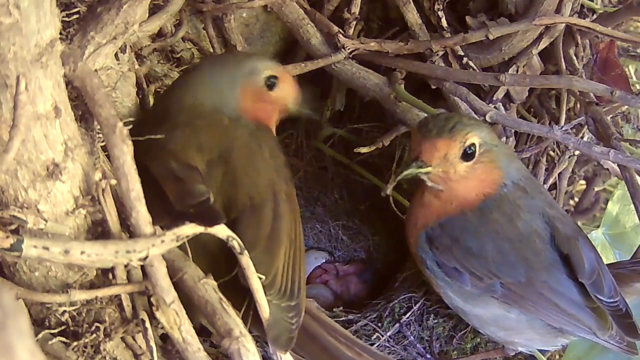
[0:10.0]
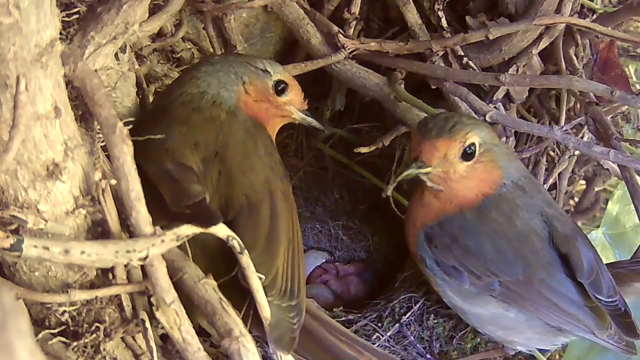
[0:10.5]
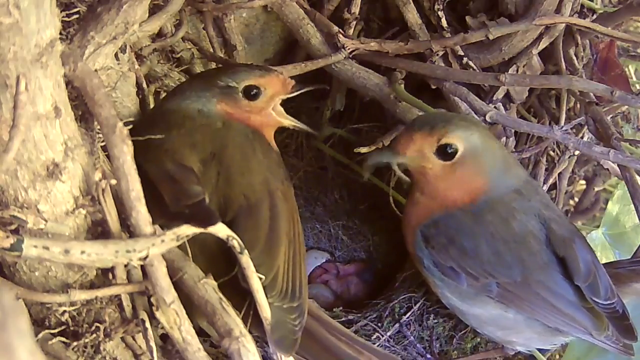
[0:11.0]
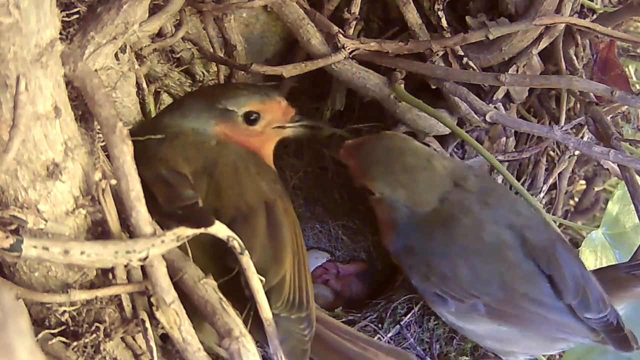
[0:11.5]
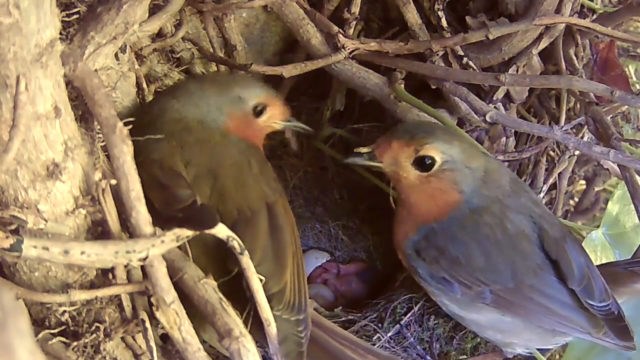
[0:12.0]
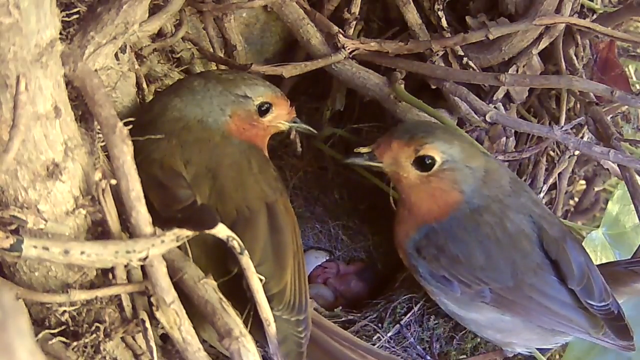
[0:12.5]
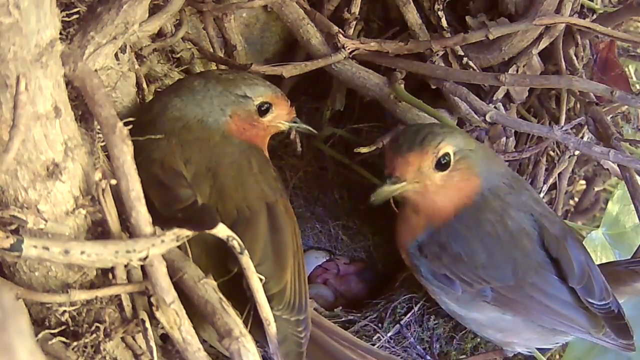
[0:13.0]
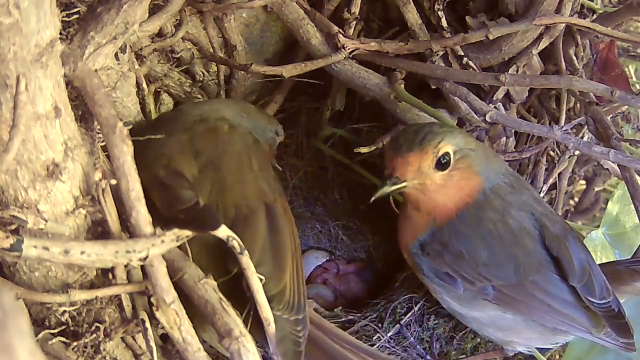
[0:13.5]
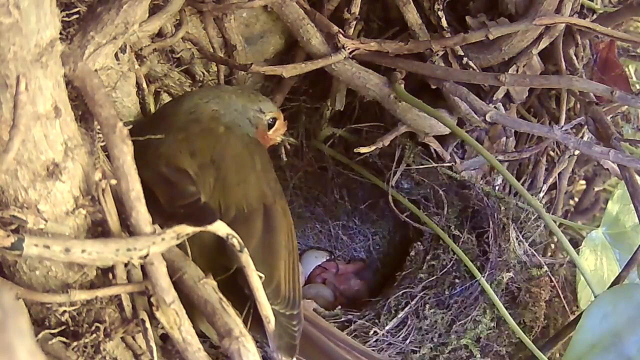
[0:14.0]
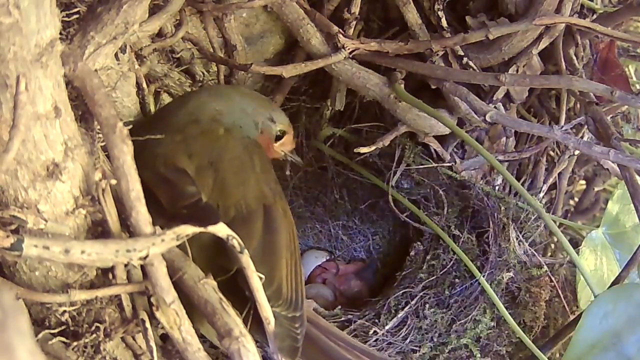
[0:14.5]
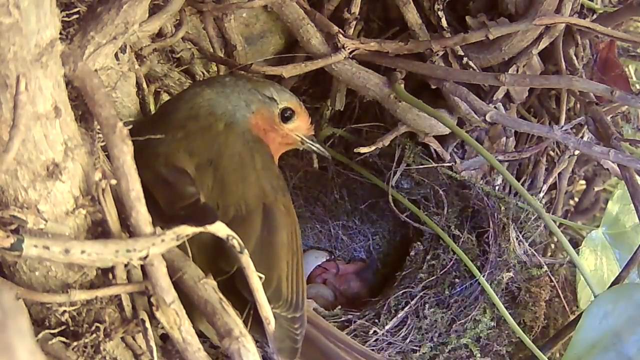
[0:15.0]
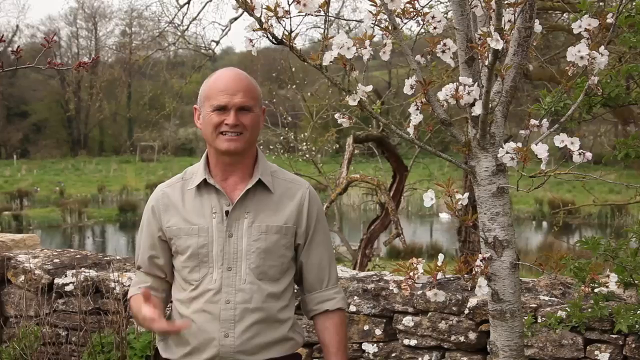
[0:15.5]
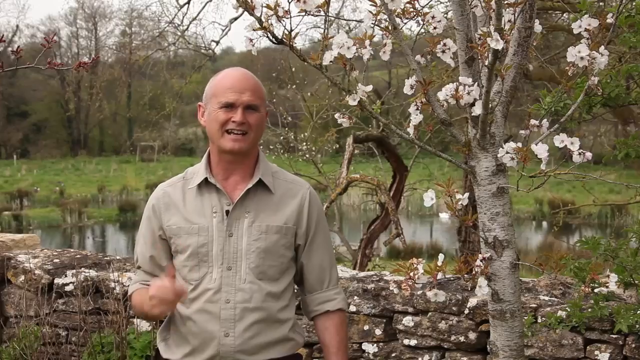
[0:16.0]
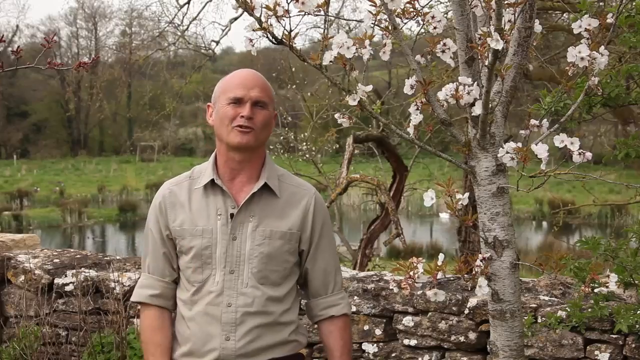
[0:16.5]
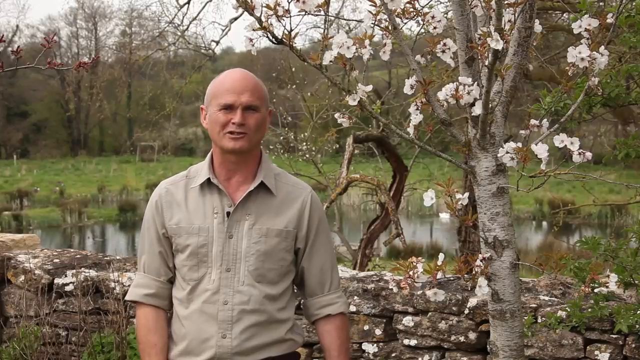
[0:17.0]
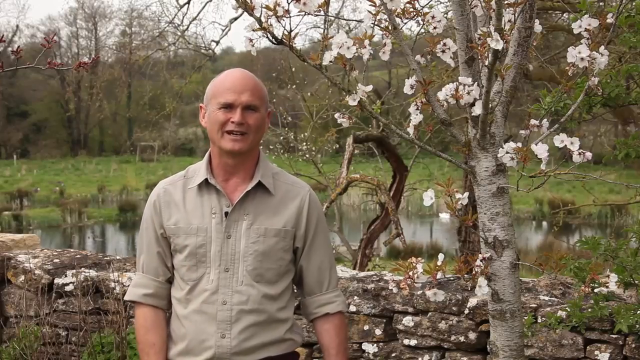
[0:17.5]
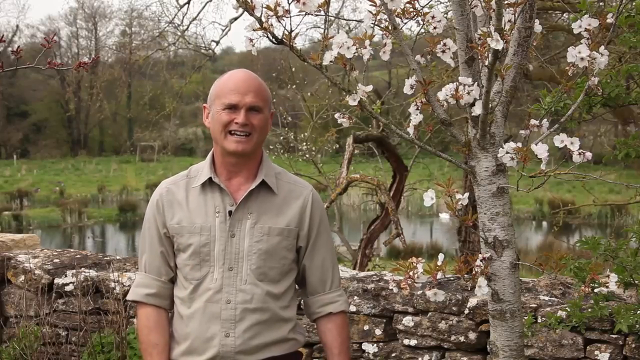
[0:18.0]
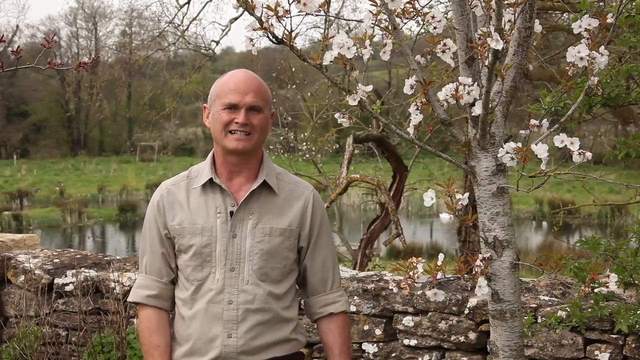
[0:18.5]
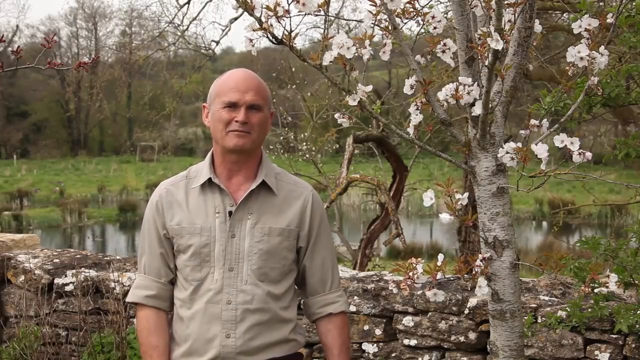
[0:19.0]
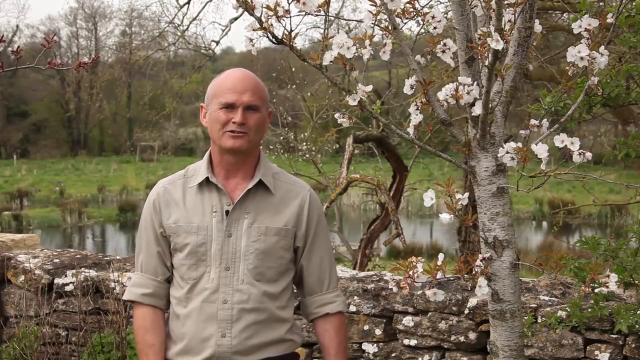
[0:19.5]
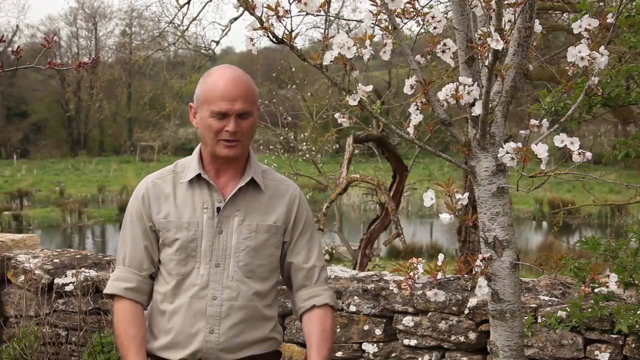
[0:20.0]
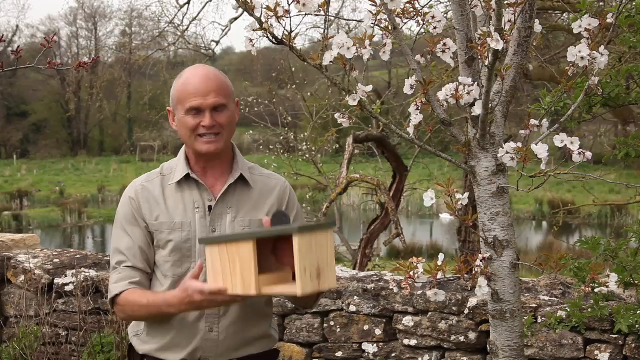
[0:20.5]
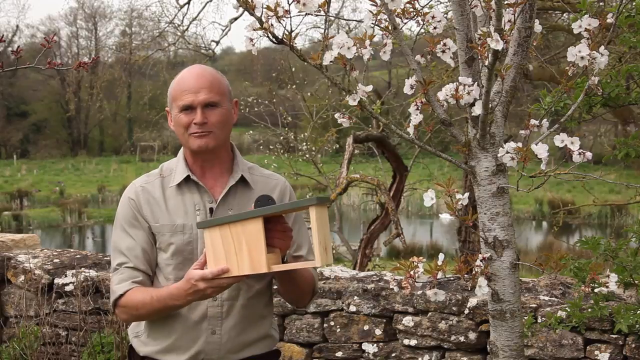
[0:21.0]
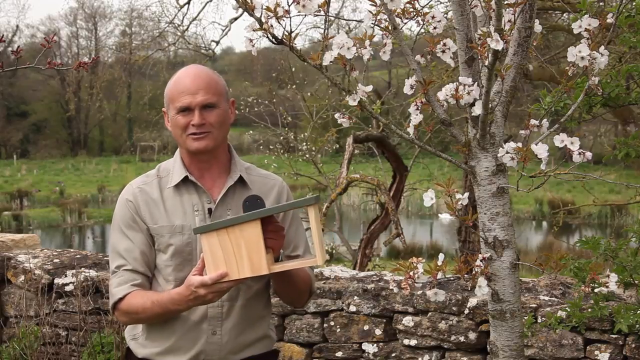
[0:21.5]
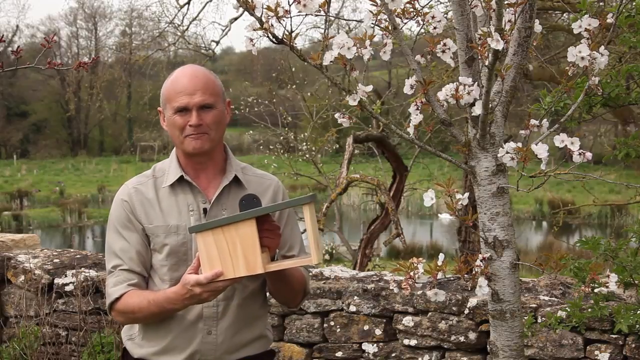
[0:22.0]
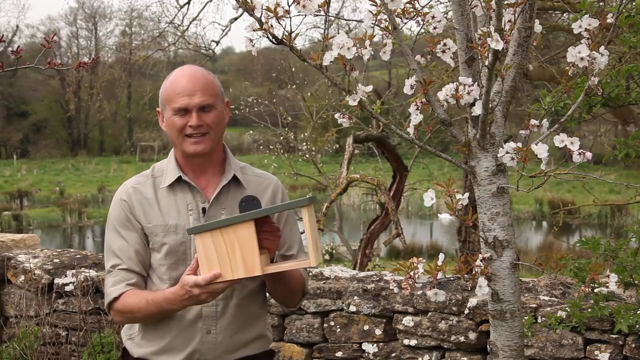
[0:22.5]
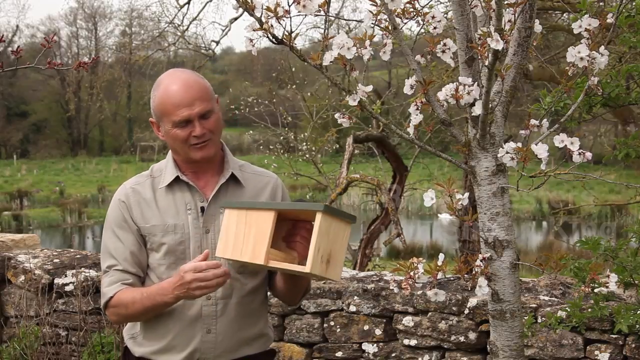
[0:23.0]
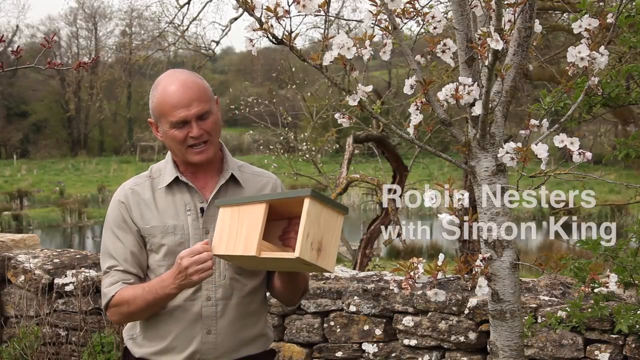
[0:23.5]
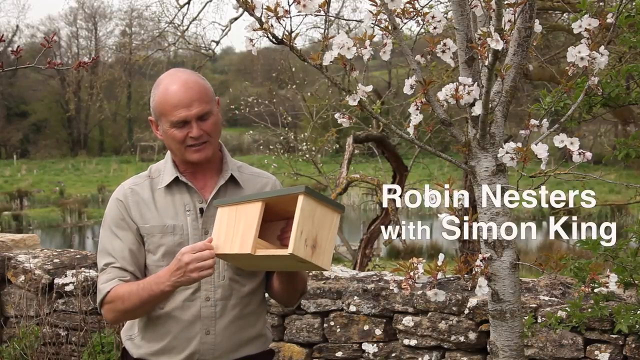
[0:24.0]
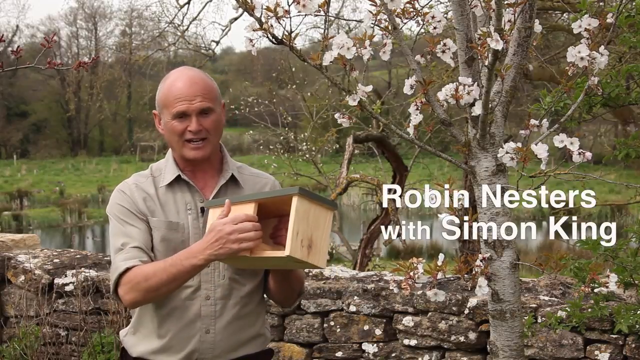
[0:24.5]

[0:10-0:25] Birds are in an area close to the tree trunk. The scene then moves to a man who is standing and talking. He holds a wooden box in his hand and makes many gestures with his hands. He then moves to the box and demonstrates it, apparently trying to explain how it works. He walks up to a building and places the box in a particular spot, staying there and still talking. The man wears a brown shirt and a wristwatch.